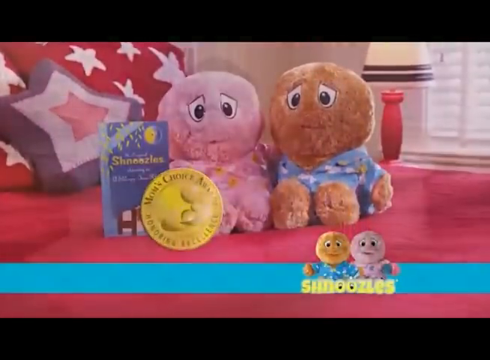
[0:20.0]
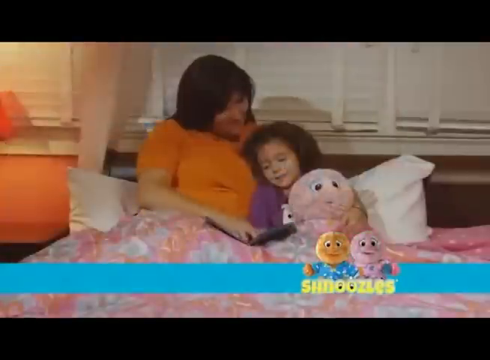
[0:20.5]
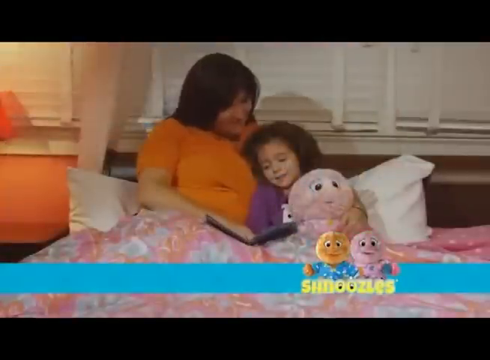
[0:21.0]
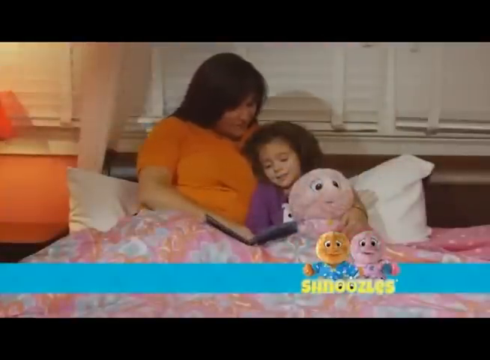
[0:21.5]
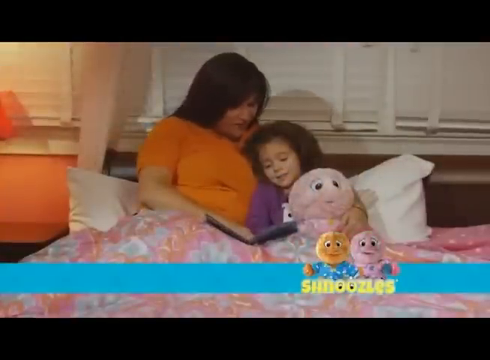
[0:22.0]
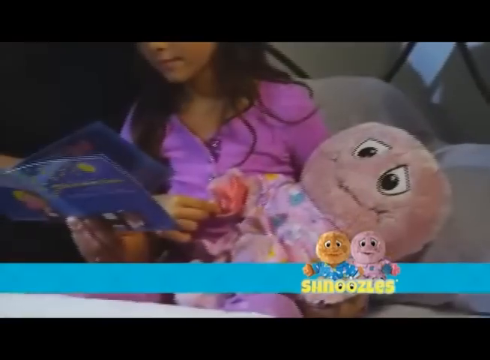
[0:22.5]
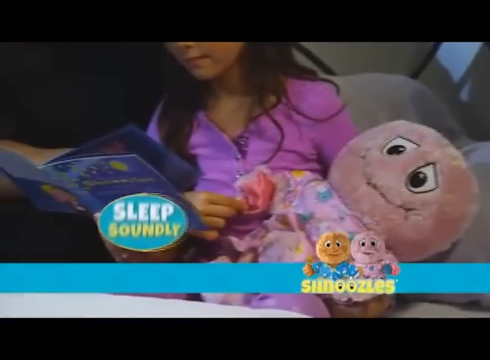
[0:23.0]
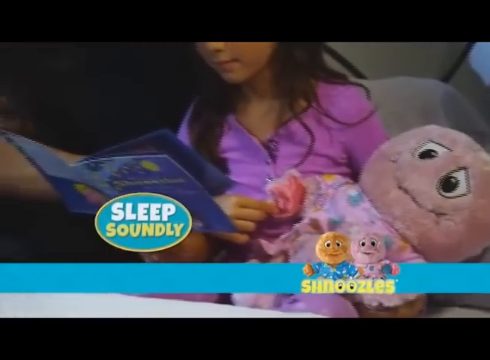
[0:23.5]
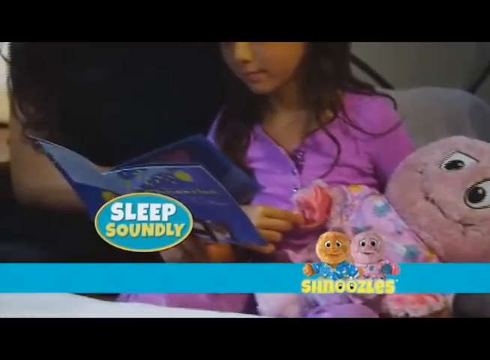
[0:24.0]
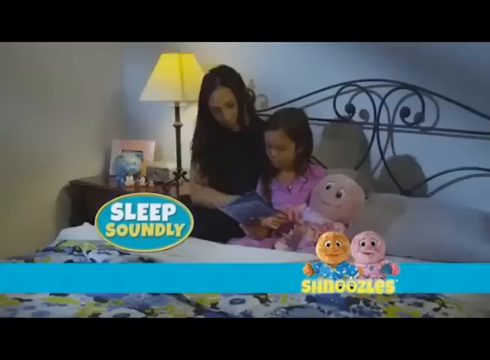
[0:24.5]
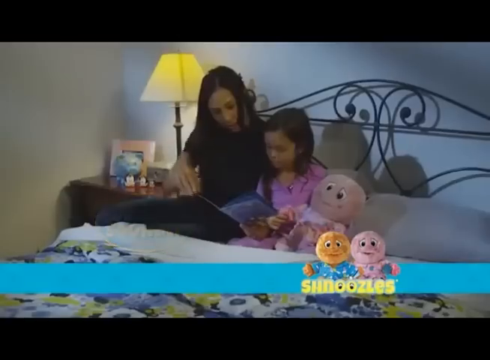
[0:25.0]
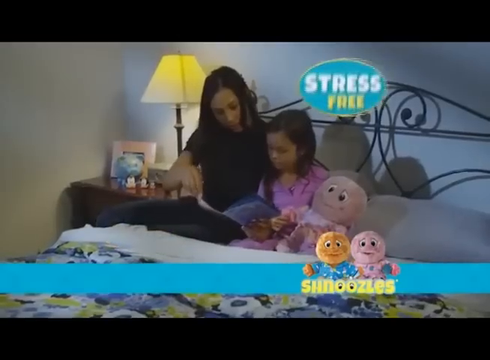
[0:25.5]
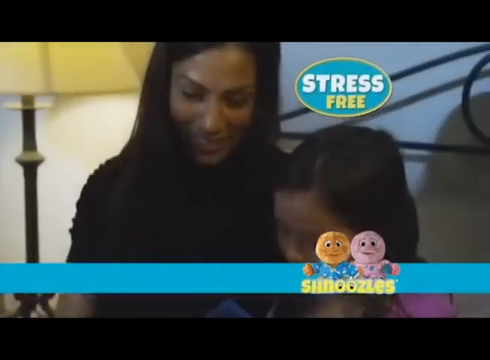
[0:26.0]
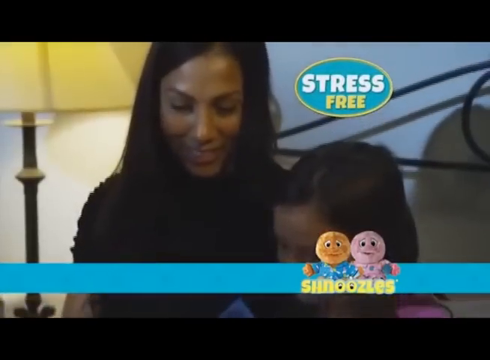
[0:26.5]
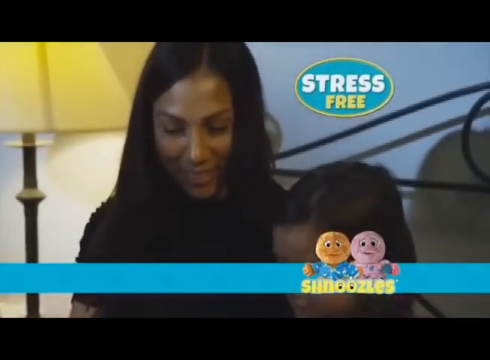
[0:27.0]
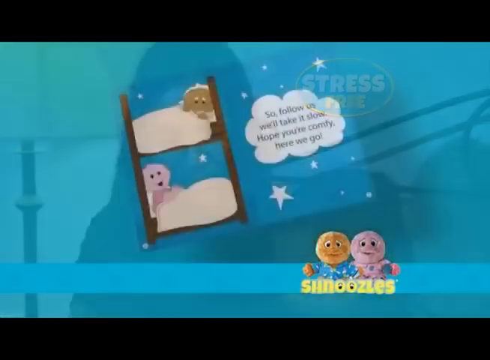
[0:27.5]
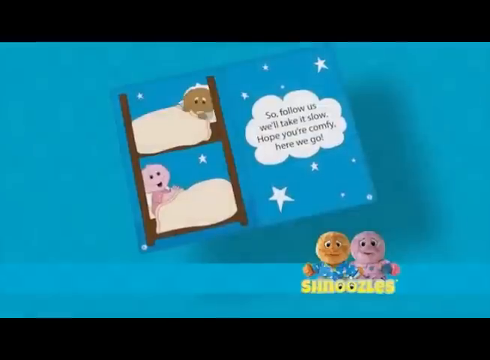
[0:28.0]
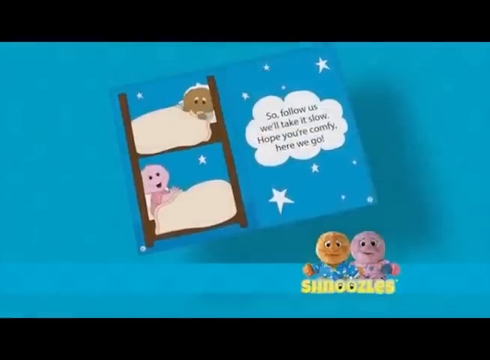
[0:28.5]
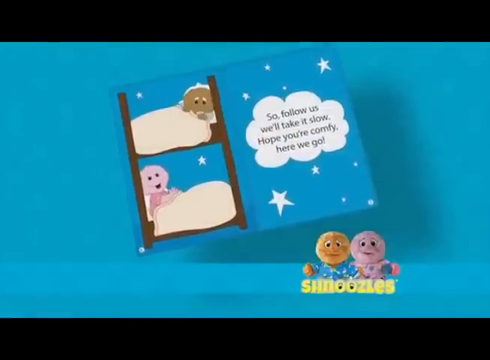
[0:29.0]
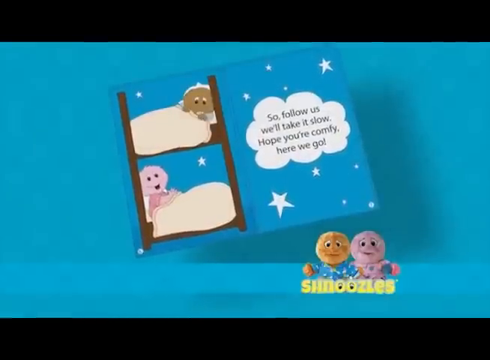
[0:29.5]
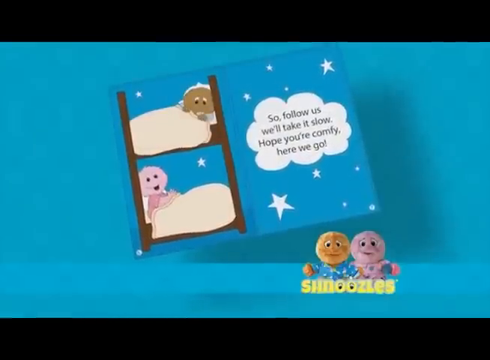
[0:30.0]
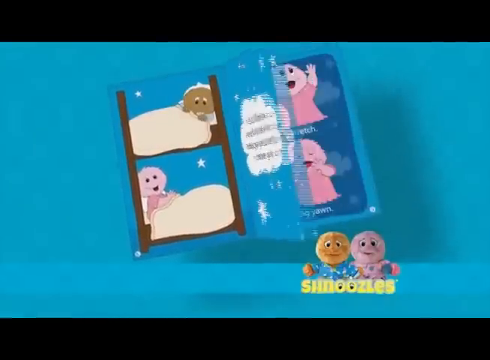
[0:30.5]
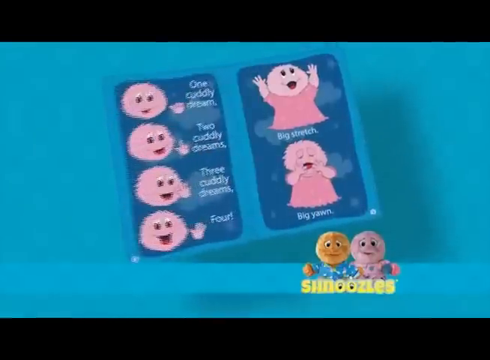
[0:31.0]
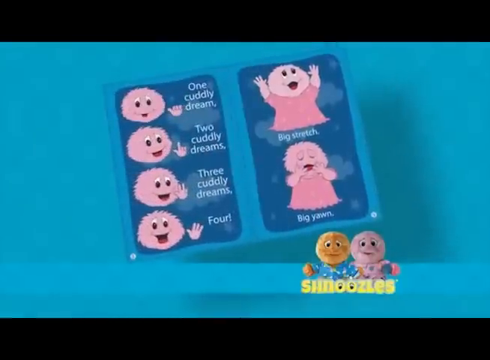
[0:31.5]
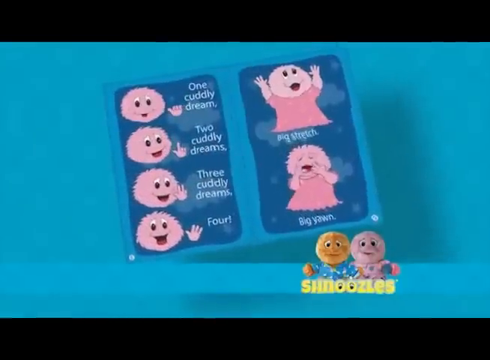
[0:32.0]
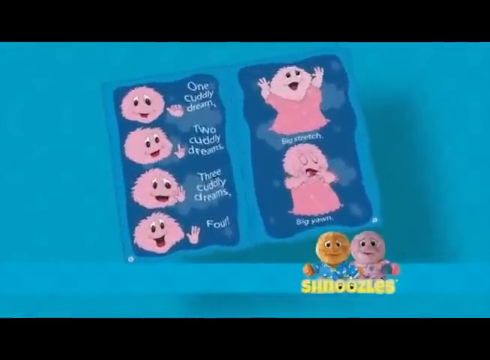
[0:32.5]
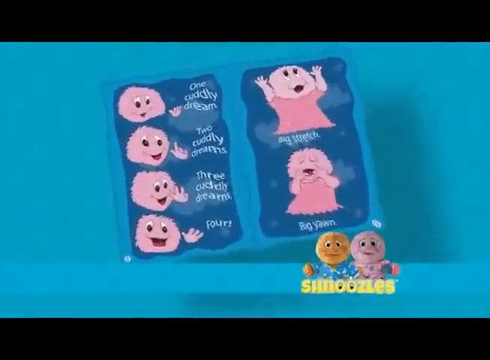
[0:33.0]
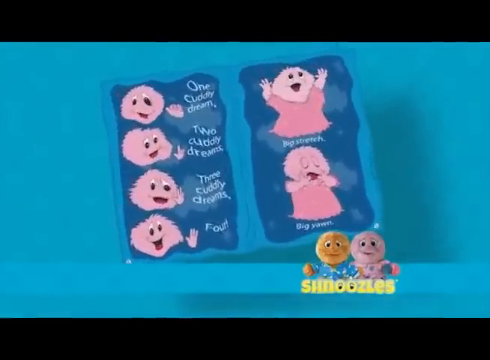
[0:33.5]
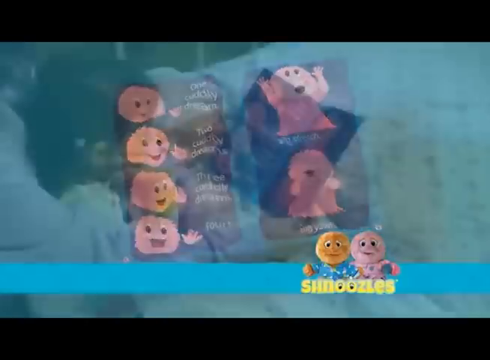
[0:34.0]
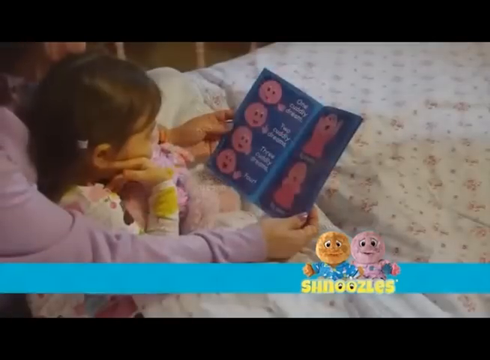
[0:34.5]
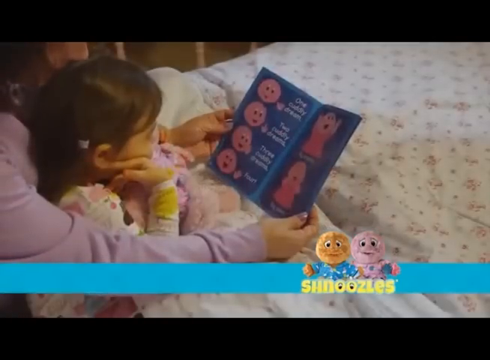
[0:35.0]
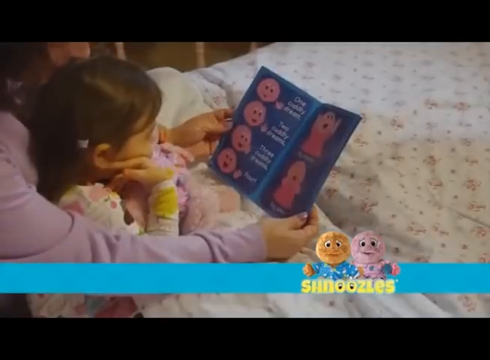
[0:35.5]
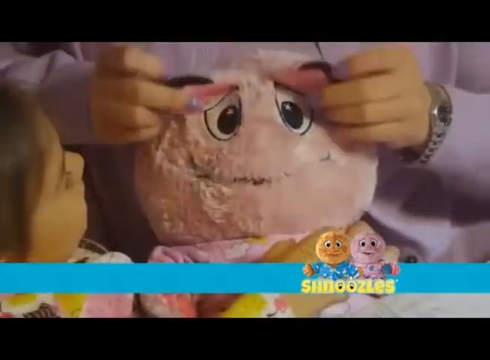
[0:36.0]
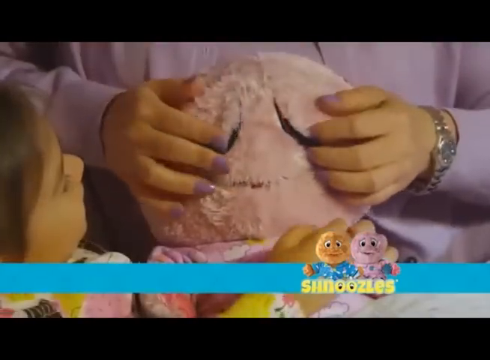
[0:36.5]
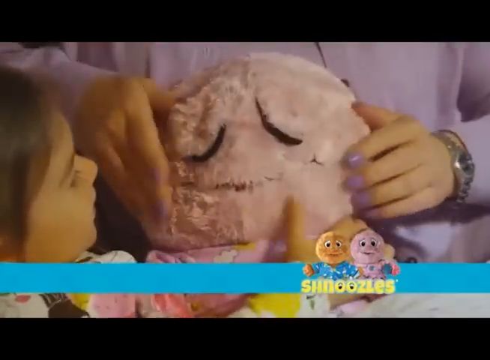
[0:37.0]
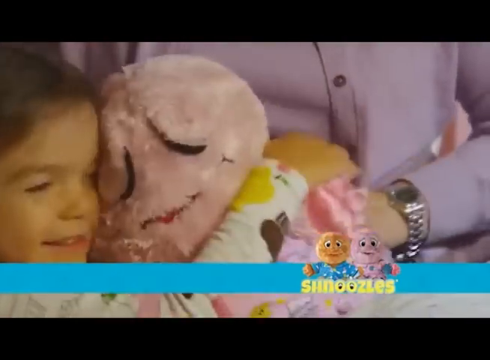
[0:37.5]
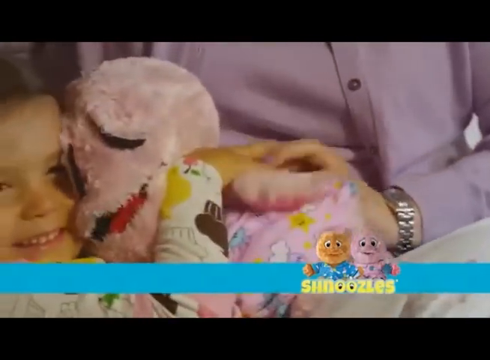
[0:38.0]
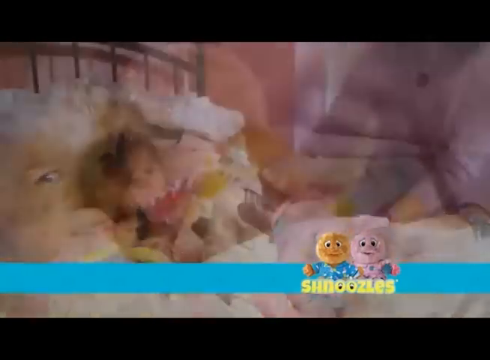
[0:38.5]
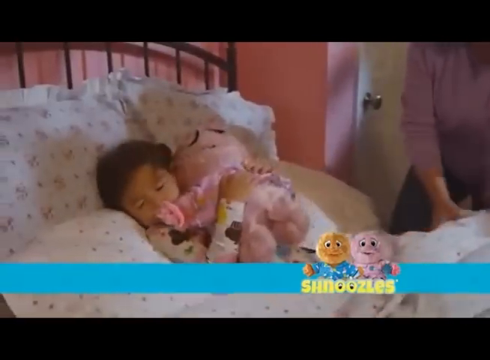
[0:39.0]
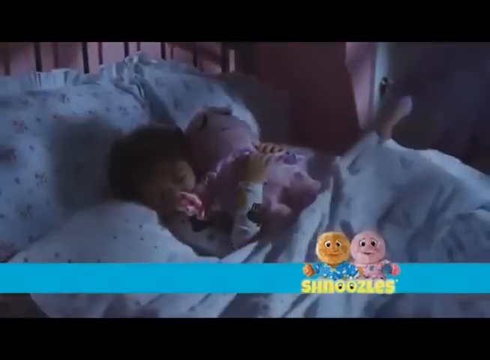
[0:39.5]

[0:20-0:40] Two snoozles, stuffed animals wearing pajamas, are sitting on a bed. They have kind of sad-looking, tired eyes and a mouth, but no nose. The scene shifts to a mother lying in bed with her daughter, reading a book. The text "stress-free" appears, and the book reads "so follow us, we'll take it slow, hope you're comfy, here we go". The snoozles are shown lying in their bed, and then a kind of wiggly page reads "two cuddle dreams, three cuddly dreams, four" as the mother reads it to her child. A flap on the stuffed animal's head can be pulled down to close its eyes. The little girl hugs the stuffed animal, and the mom turns off the light, pulls the covers up, and the girl is going to sleep.